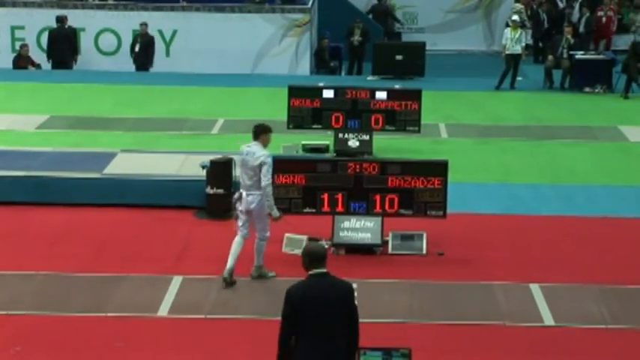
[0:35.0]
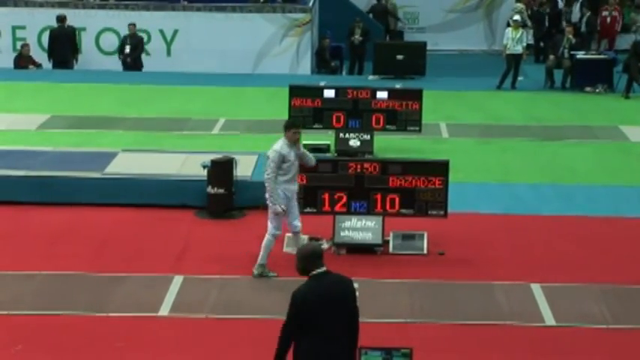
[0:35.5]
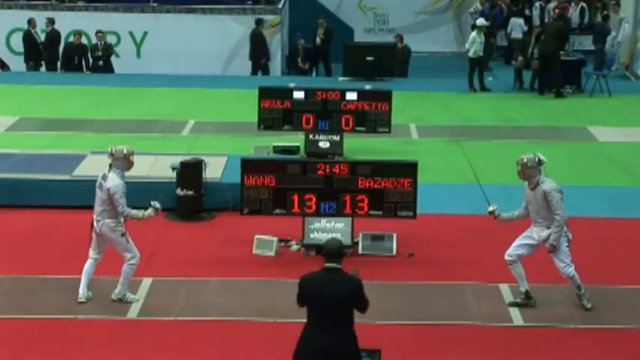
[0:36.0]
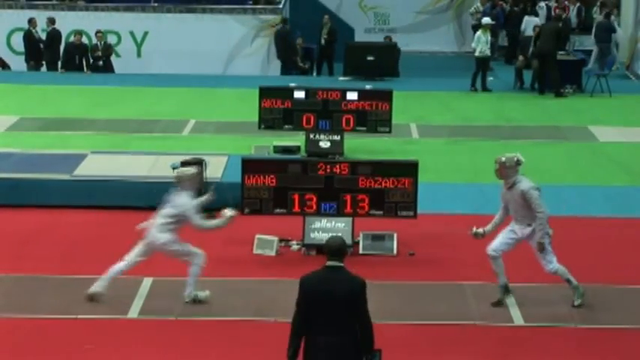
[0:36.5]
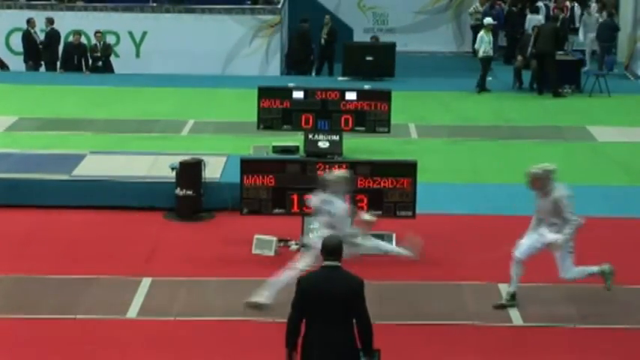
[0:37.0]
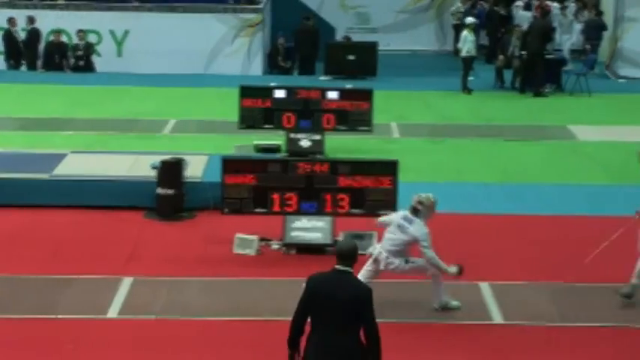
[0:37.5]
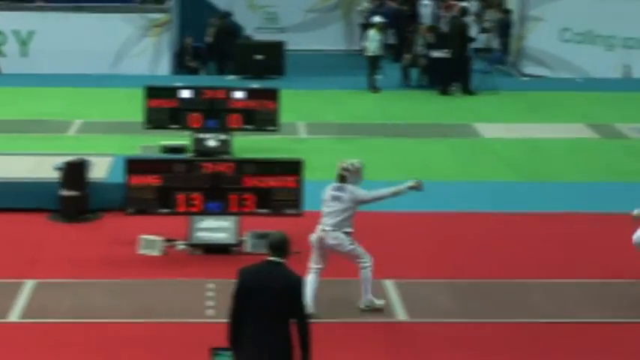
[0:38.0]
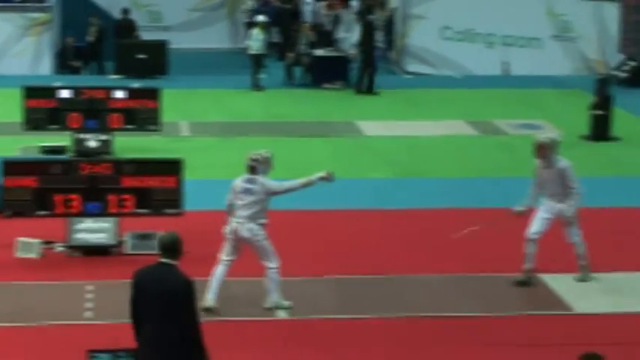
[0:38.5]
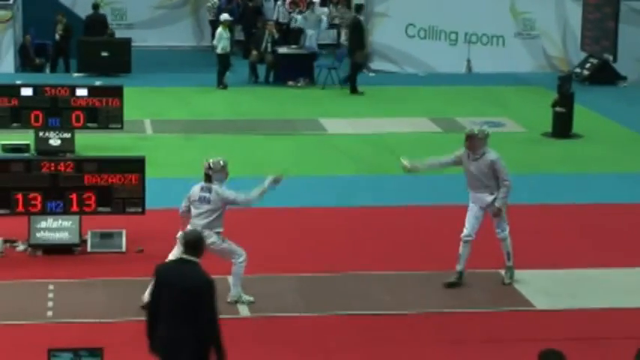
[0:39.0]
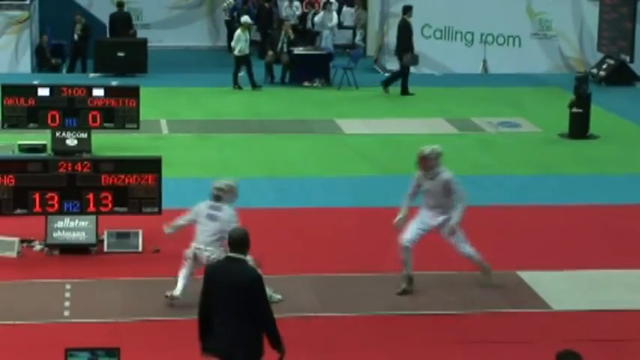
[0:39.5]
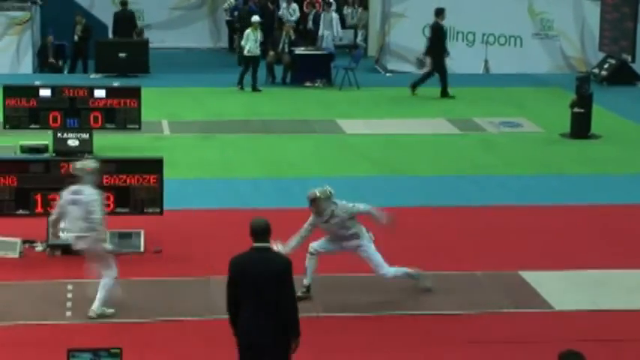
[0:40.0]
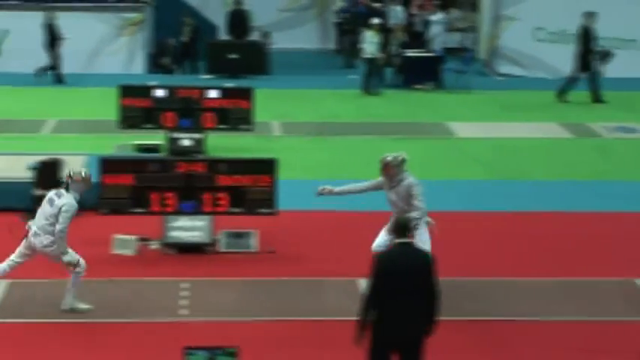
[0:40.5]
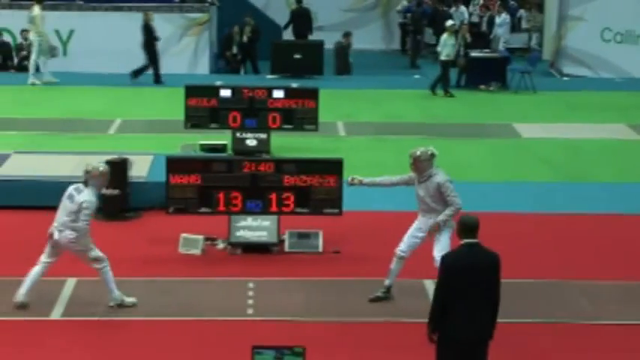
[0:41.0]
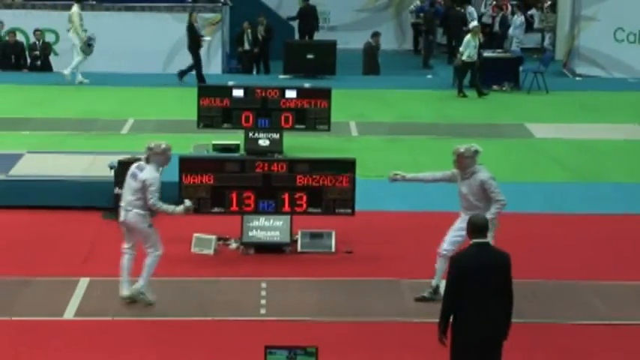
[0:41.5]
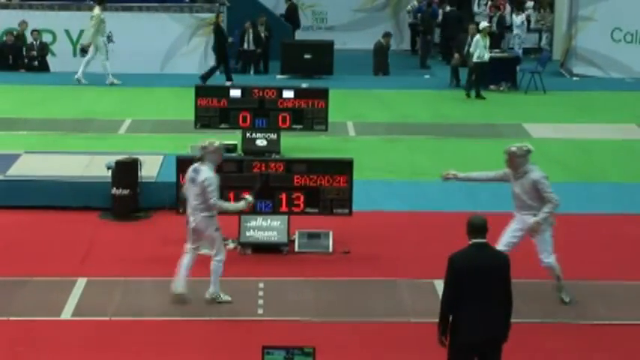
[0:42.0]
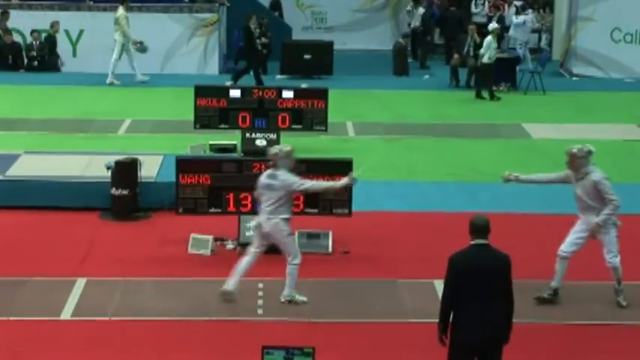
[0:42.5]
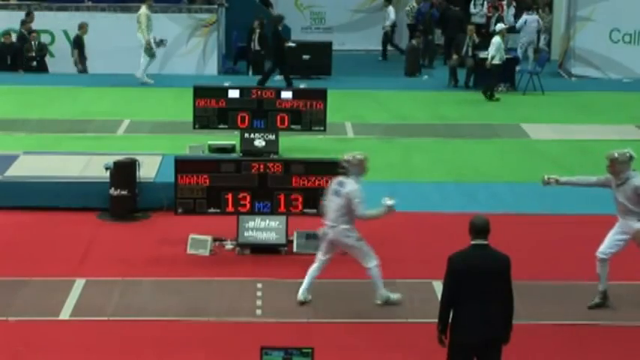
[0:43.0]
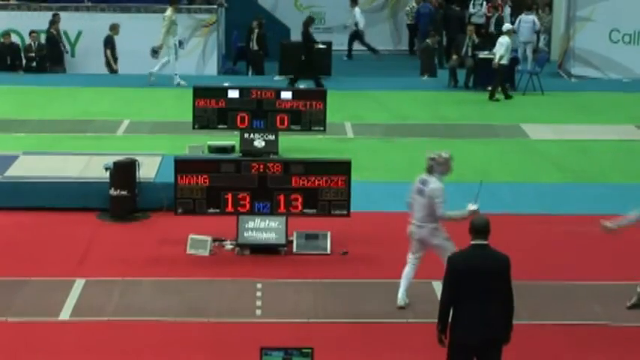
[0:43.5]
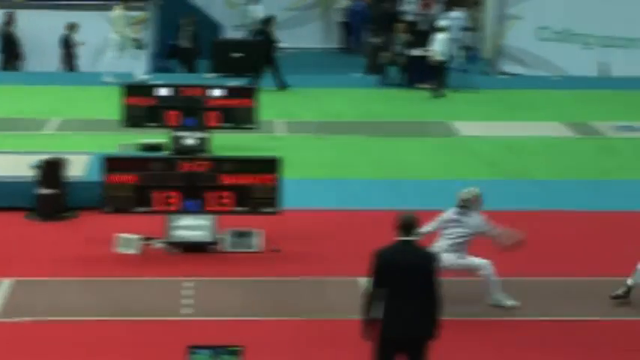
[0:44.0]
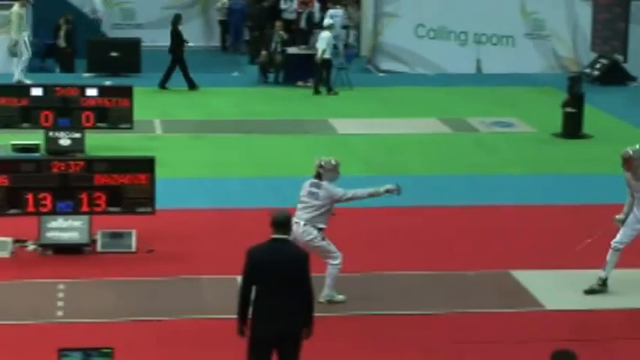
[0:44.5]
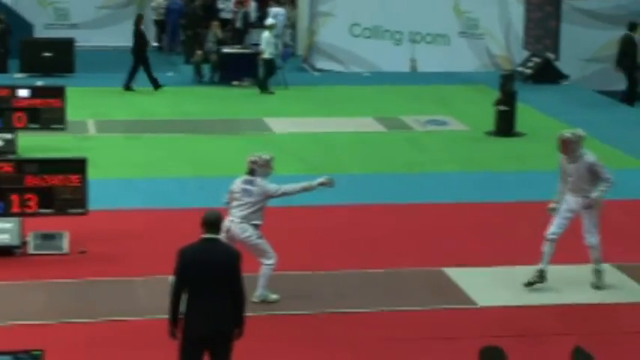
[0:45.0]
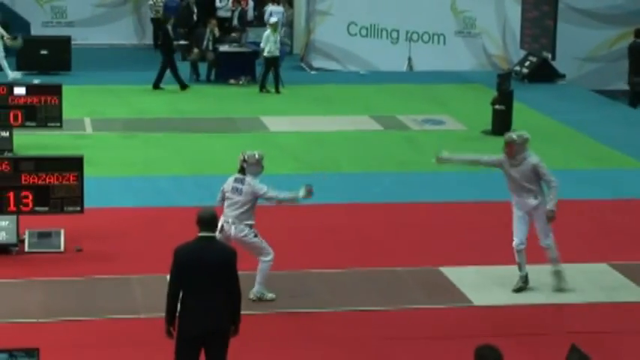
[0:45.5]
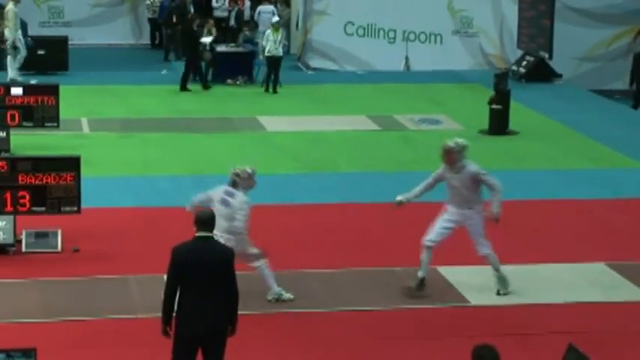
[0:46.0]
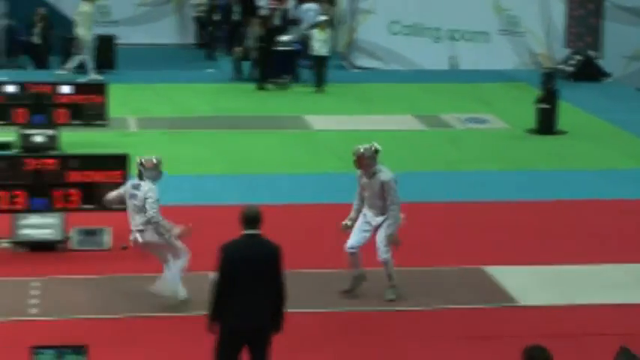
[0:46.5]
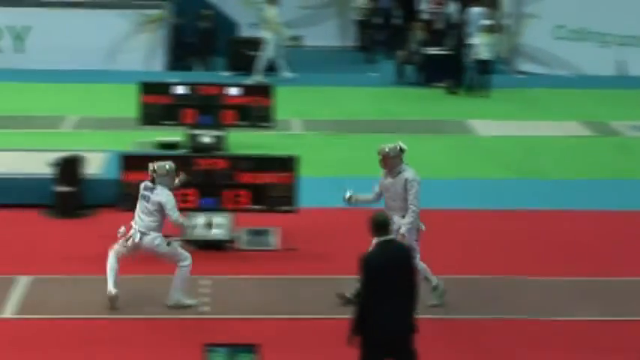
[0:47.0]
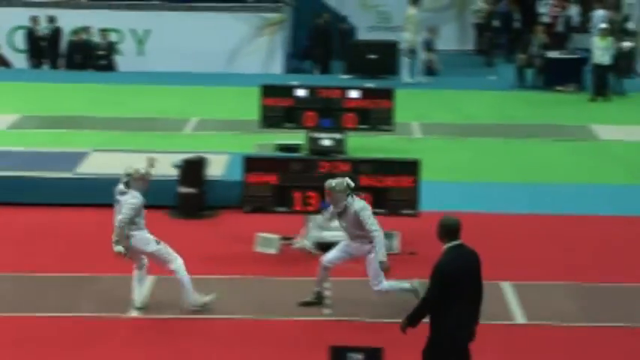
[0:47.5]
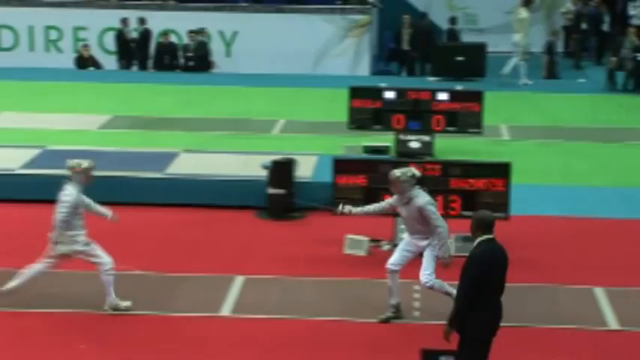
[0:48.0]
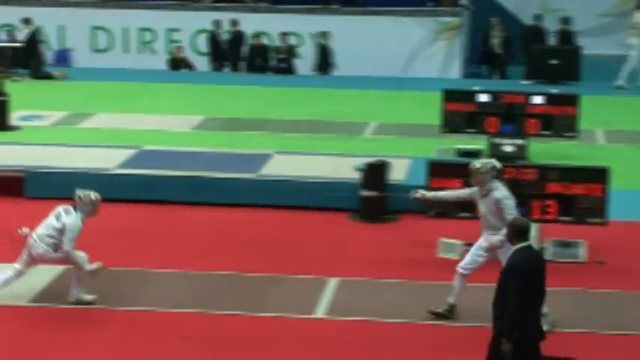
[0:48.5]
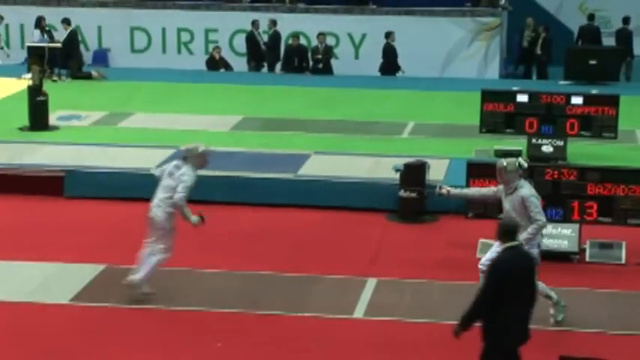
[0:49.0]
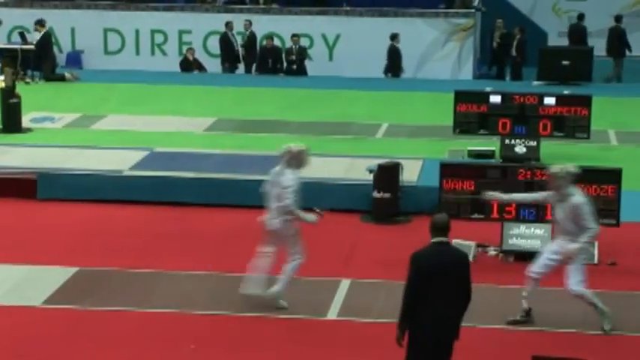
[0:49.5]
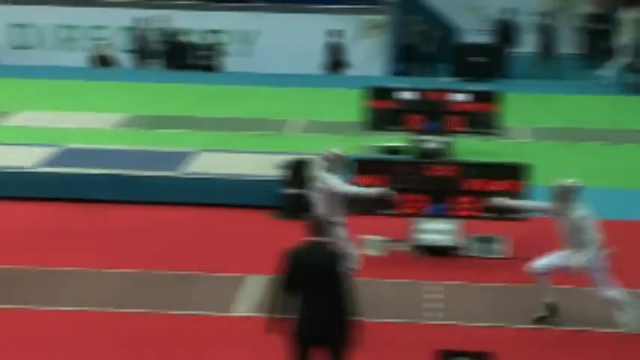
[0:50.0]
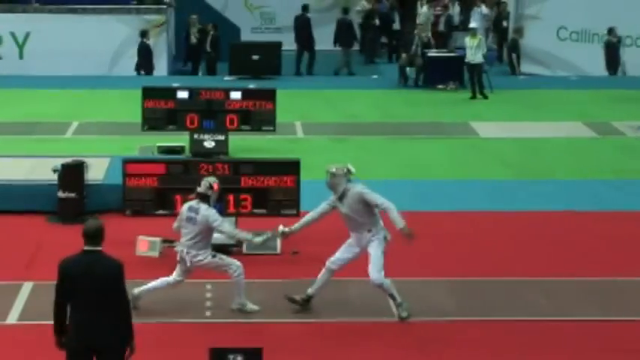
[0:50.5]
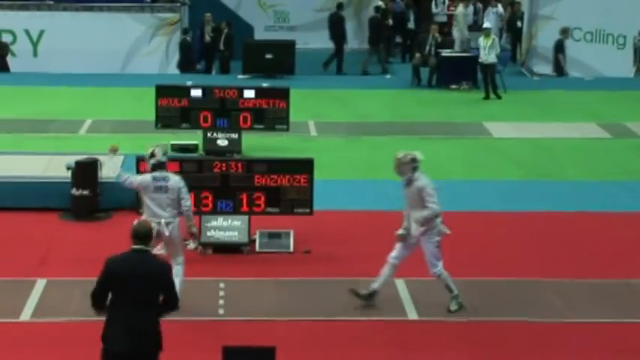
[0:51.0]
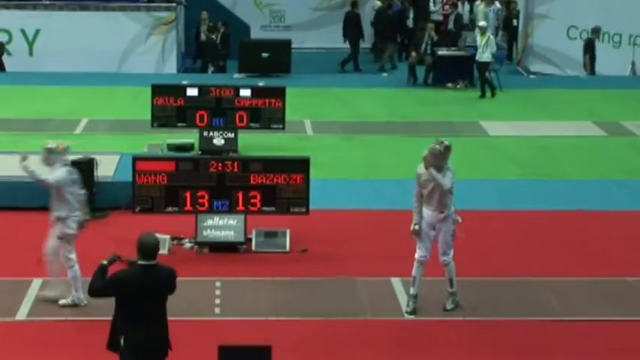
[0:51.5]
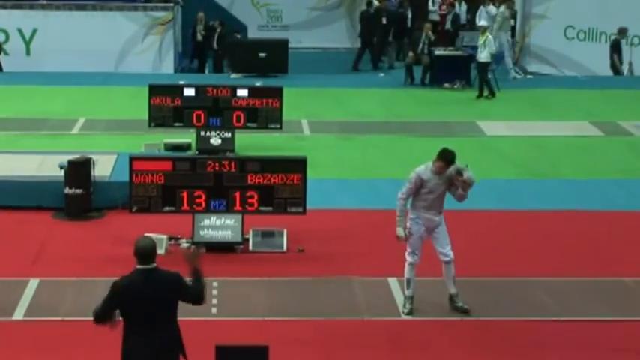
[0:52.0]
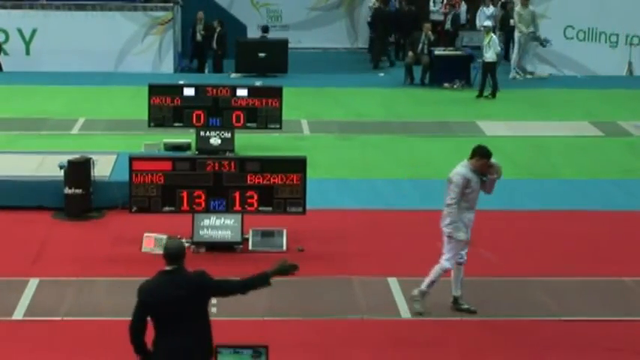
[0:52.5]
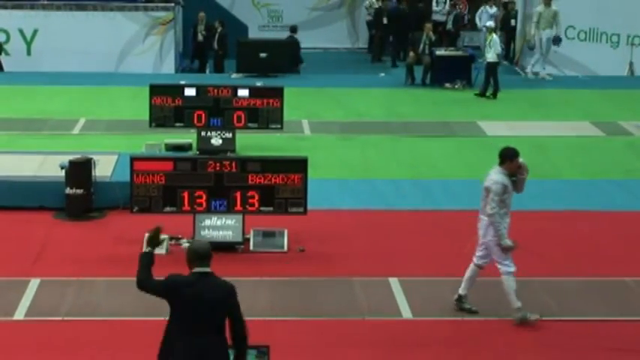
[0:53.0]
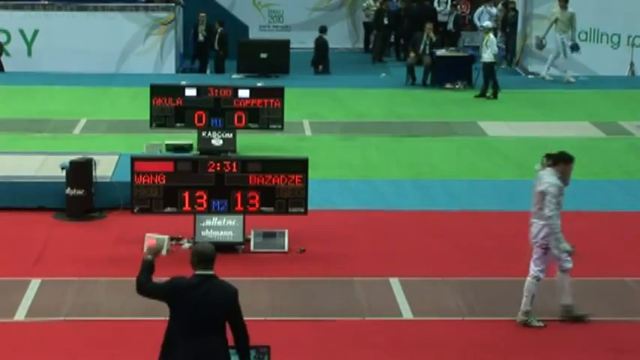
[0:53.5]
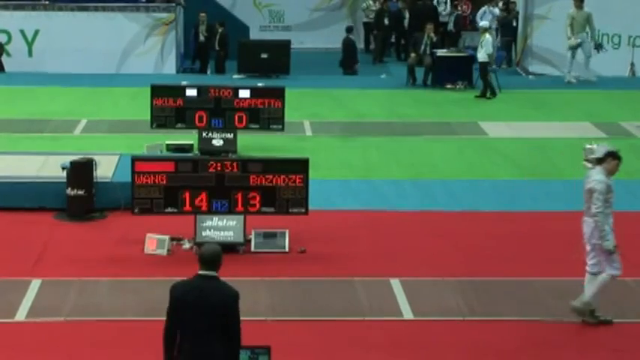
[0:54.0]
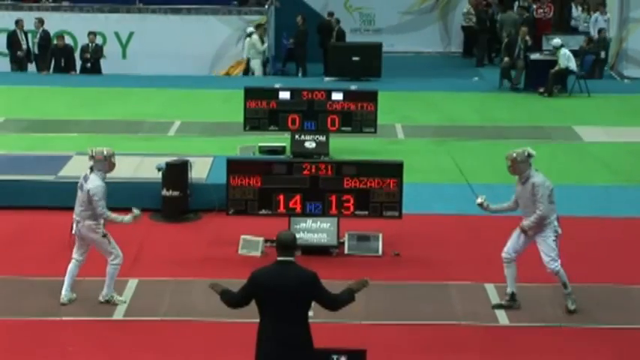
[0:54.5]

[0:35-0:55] Two male fencers compete in a fencing match, with their names on the scoreboard behind them. The score is Wang 13, Bazadze 13. Wang and Bazadze move dynamically back and forth, and in this scuffle Wang appears to score a point, taking the match to 14 to 13 and putting Wang up one point. The match behind them appears to have finished, while Bazadze and Wang are still competing, in what looks like some sort of fencing tournament with multiple matches taking place at the same time.